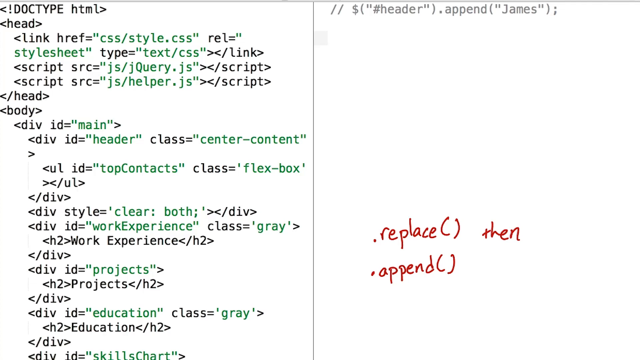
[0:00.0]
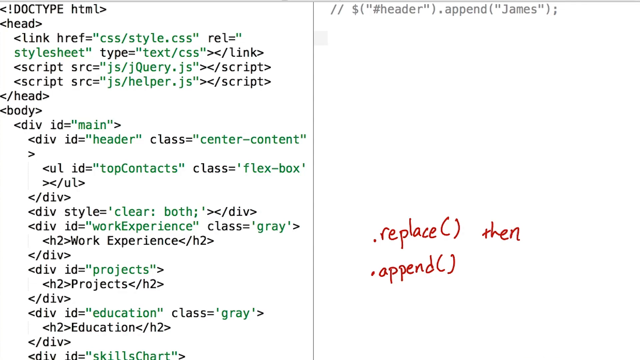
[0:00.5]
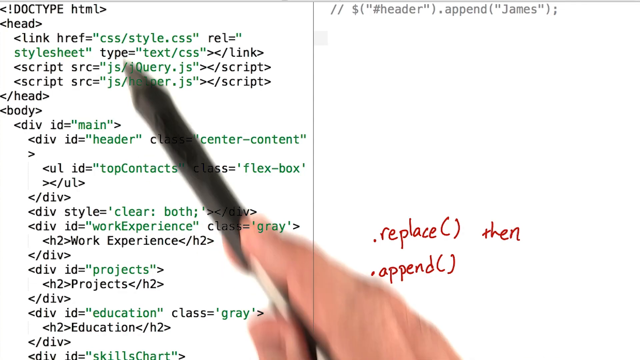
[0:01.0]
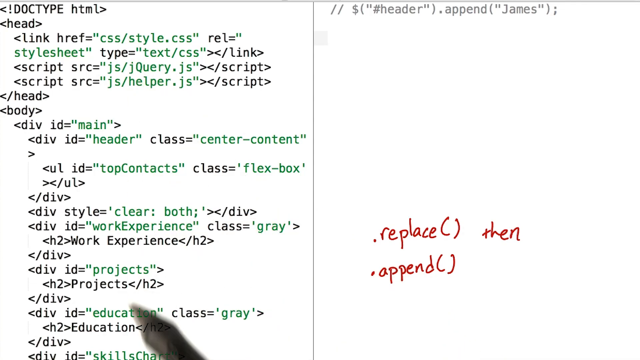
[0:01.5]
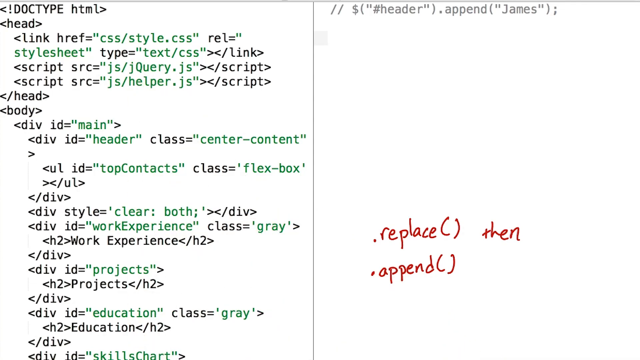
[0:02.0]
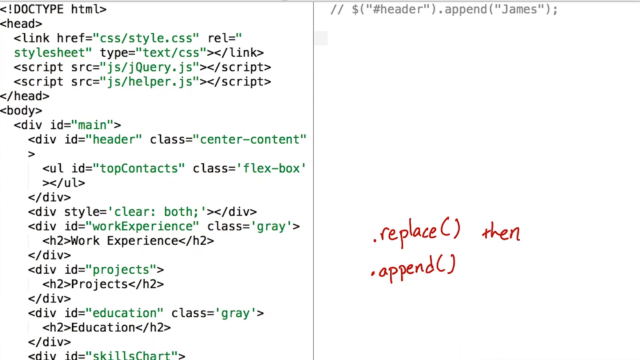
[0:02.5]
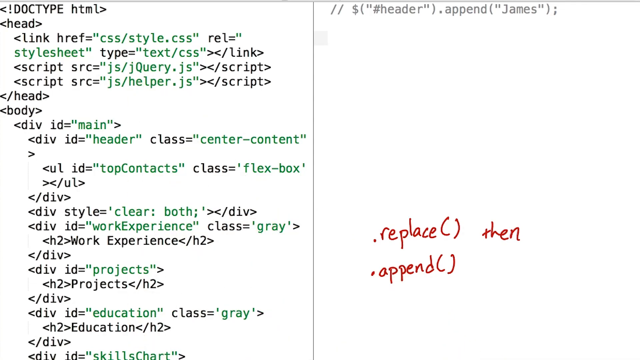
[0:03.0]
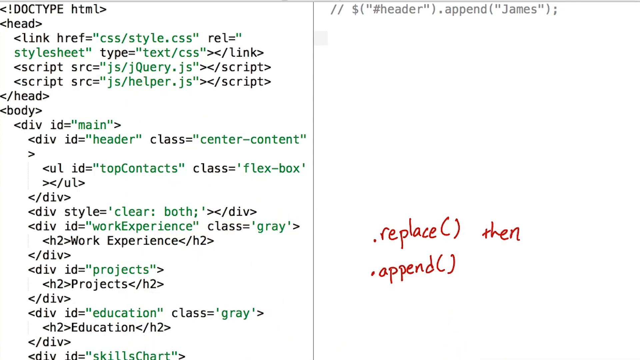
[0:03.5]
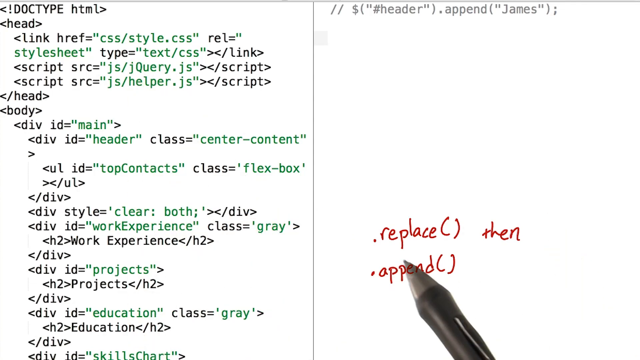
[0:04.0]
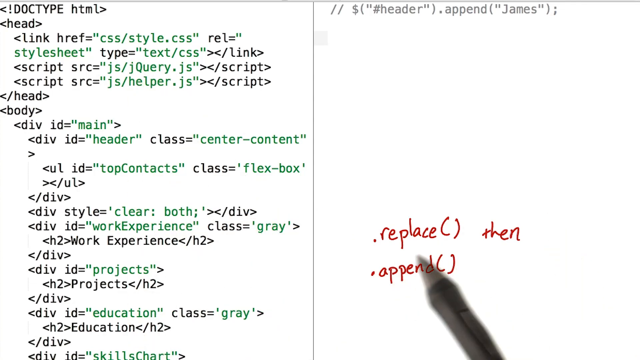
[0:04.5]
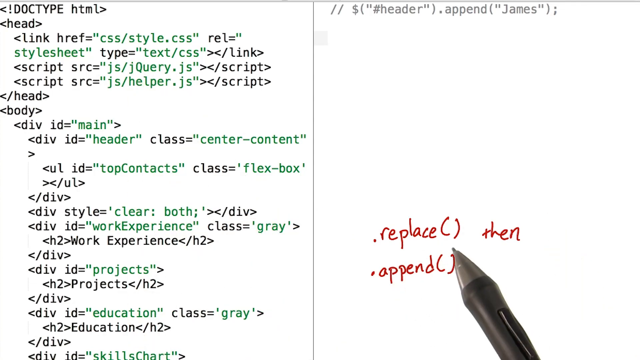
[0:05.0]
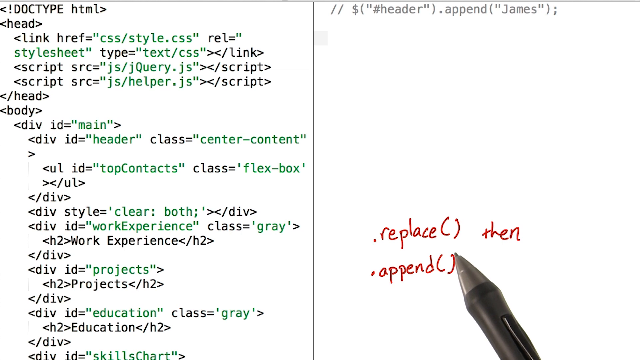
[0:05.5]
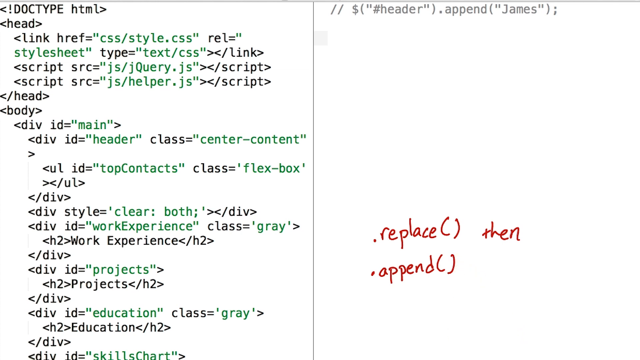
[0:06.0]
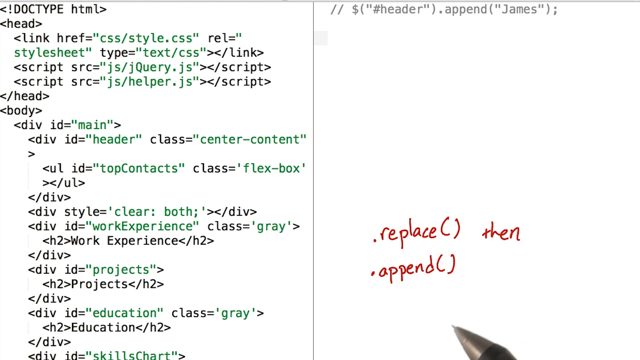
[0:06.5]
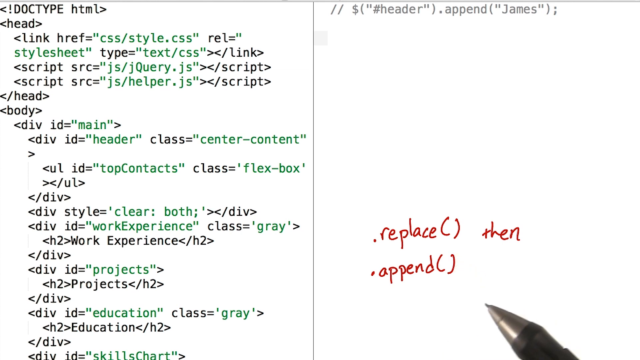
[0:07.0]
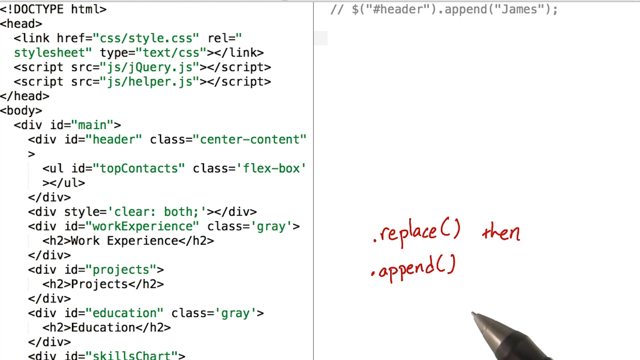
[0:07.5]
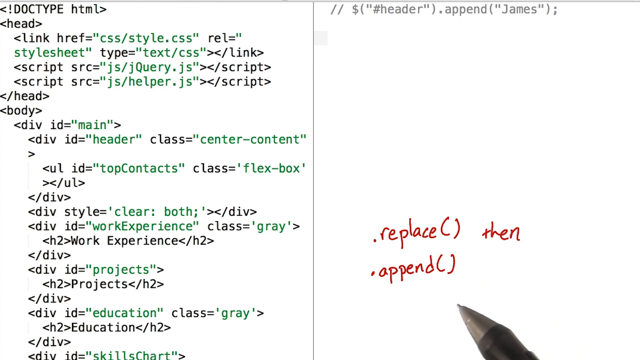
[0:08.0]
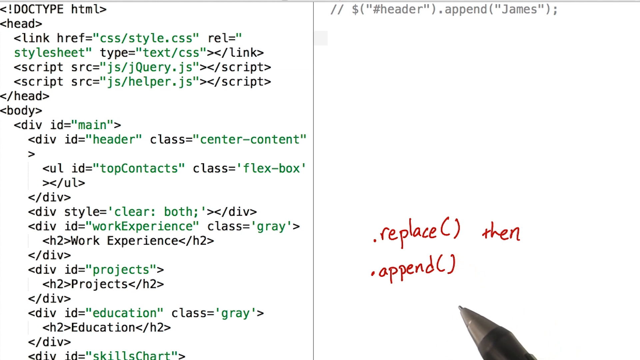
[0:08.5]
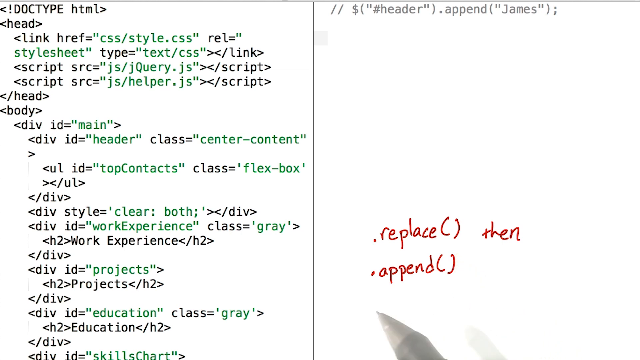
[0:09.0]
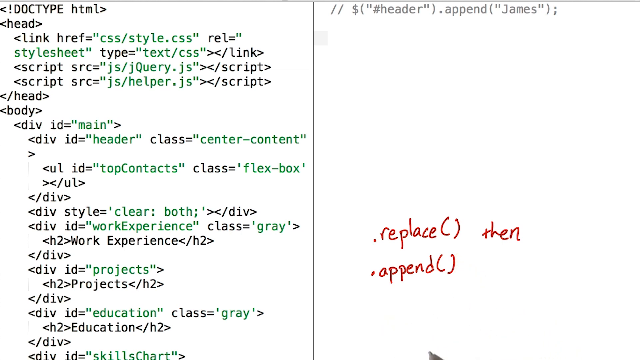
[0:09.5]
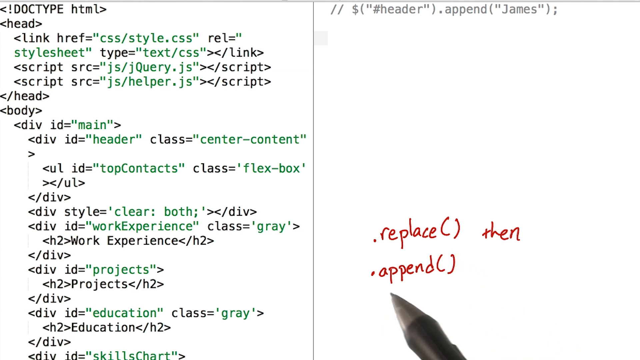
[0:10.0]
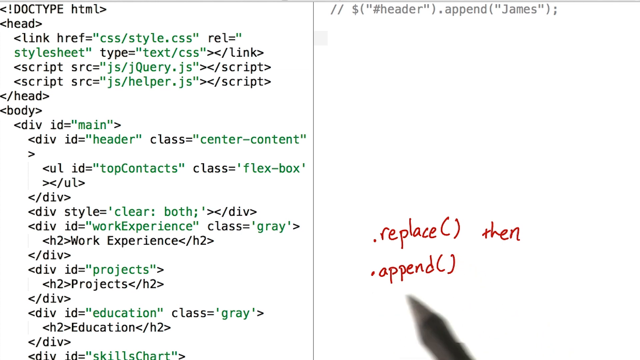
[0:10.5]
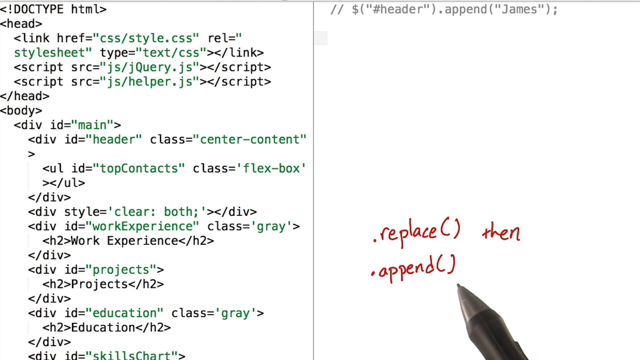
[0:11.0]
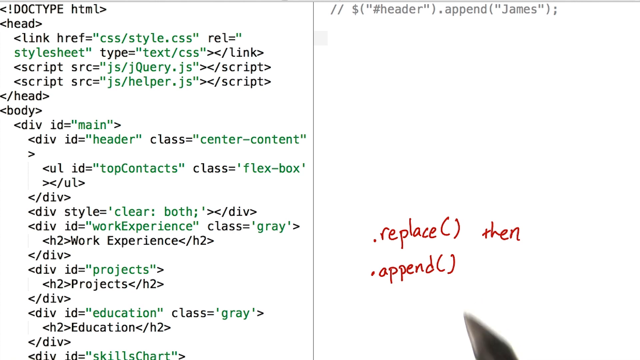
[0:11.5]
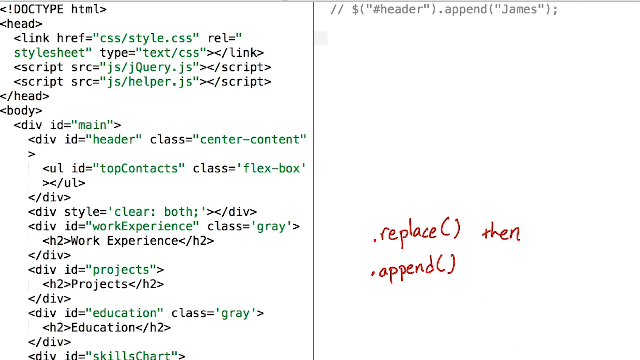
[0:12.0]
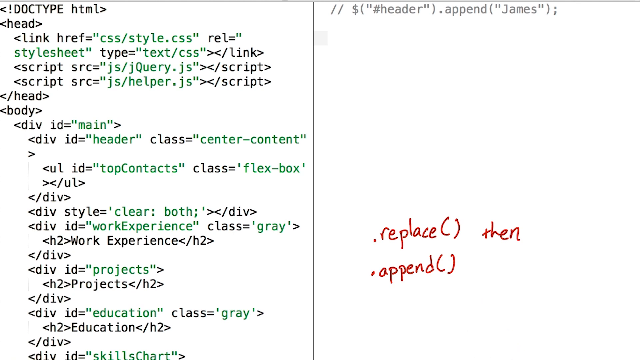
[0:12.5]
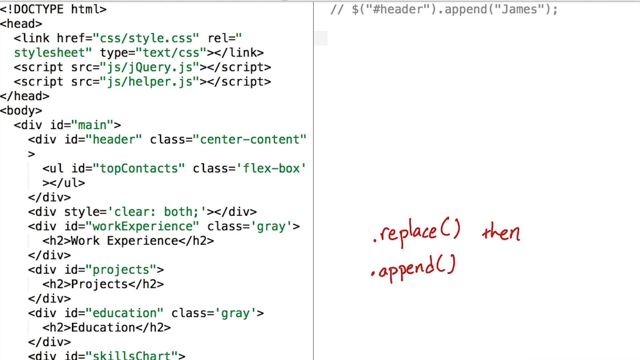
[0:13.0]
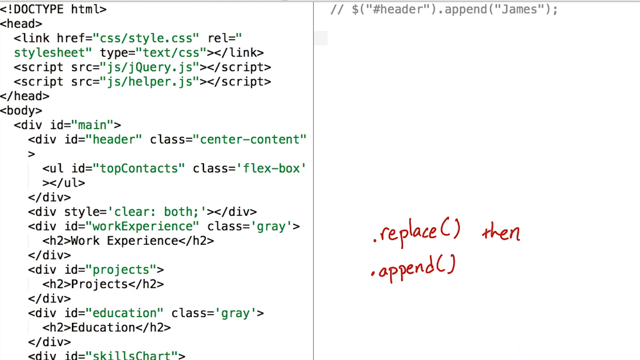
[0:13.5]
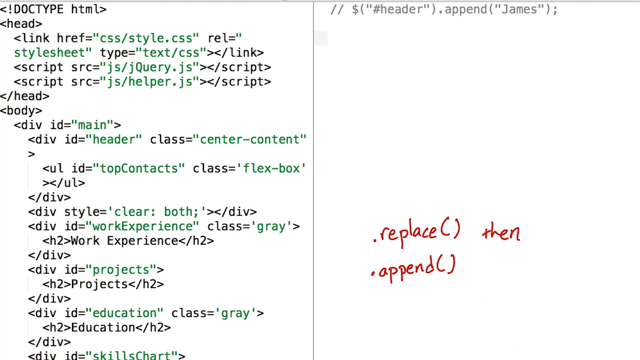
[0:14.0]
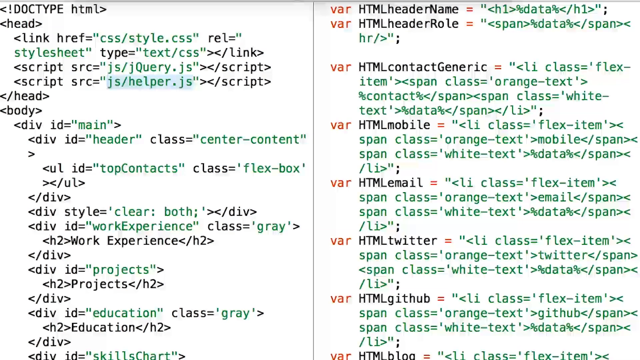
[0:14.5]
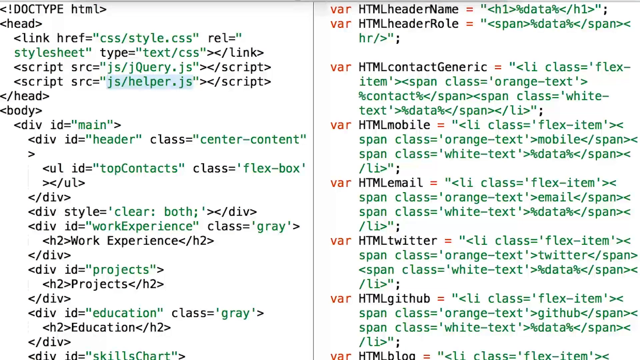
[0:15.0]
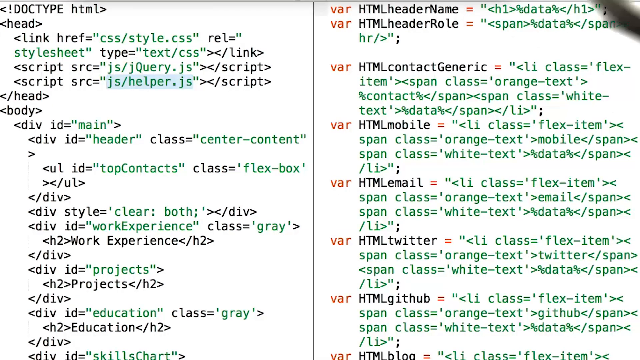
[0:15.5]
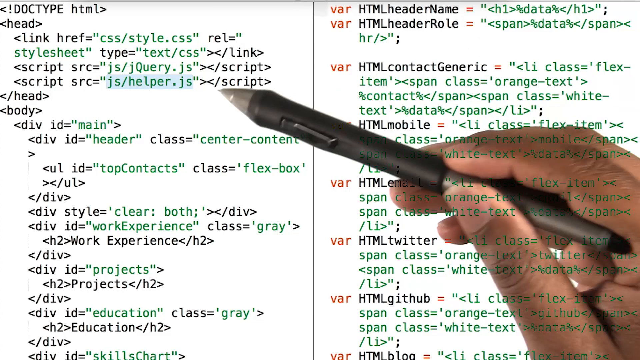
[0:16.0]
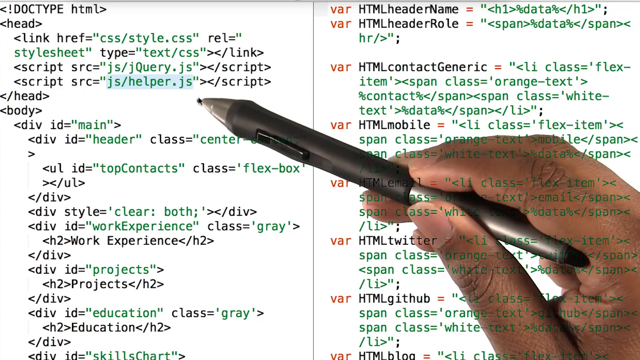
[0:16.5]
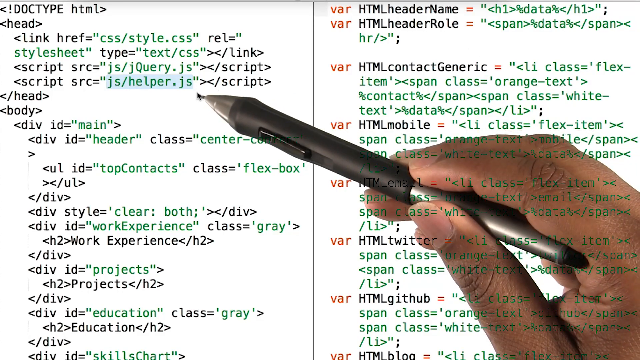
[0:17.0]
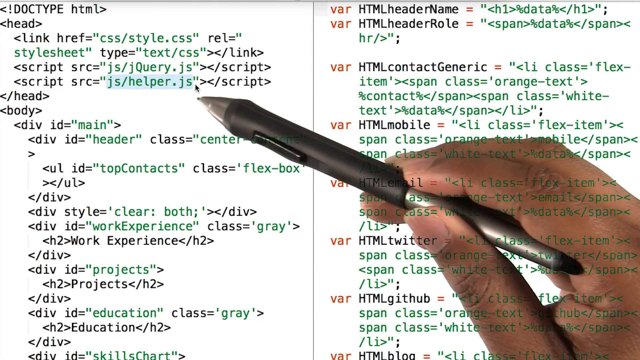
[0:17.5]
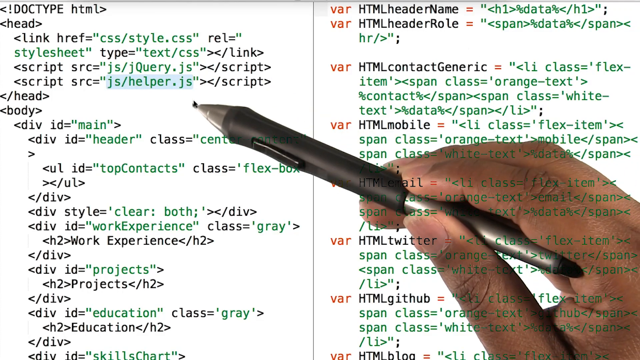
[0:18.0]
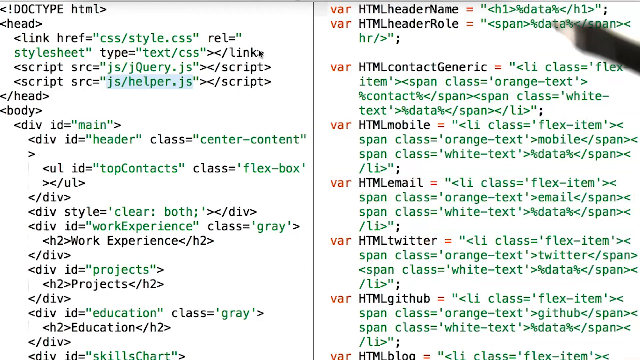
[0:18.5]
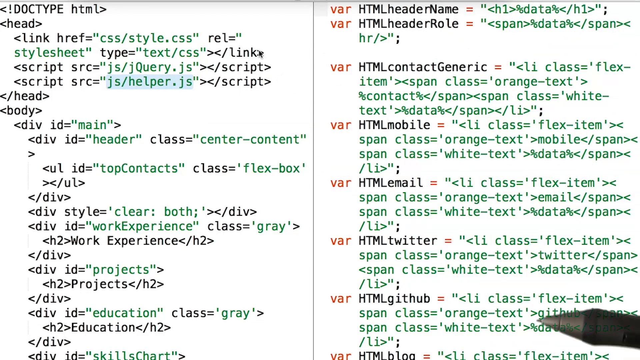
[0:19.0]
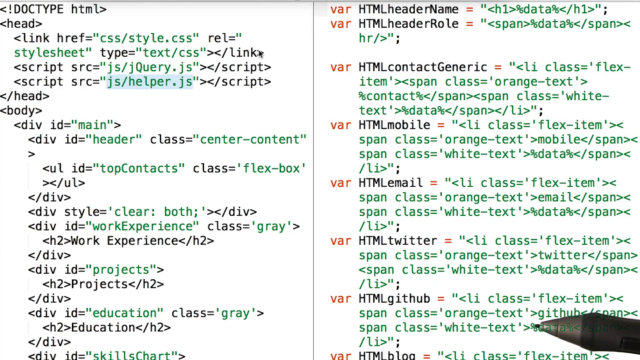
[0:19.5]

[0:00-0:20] The screen is divided in half by a black dividing line. The right side does not have much on it and seems to be an area for the person recording to write on, with some things already written in marker. At the top of the right side there is a double slash and a line containing a money sign, brackets, quotes, "#header" and "James". At the bottom, written in red, are ".replace()" and "append()". The left side holds HTML code: it says "doc type HTML" with open and close arrows, then "head", then the CSS style text with the style sheet type "text/css". There are two scripts: the first with src "JS/jcurry.js" and the second with "JS/helper.js". Below that is the body, containing the main and the header with class "center content", a UL ID "top contacts" with class "flex box", a div style "clear both", a div ID "work experience" with class "gray" and a header two for work experience, a div ID "projects" with a header two for projects, and a div ID "education" with "gray" and a header two for education. The code looks like it might be making some sort of resume sheet about work experience. The user's pen moves around, pointing at what has been written. The right side then fills in with more text: a list of variables, each starting with "var", named HTML header name, HTML header row, HTML contact generic, HTML mobile, HTML email, HTML Twitter and HTML GitHub. The user then highlights "JS/helper.js" on the left.